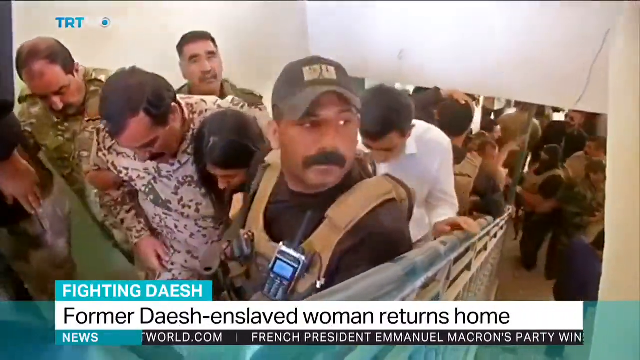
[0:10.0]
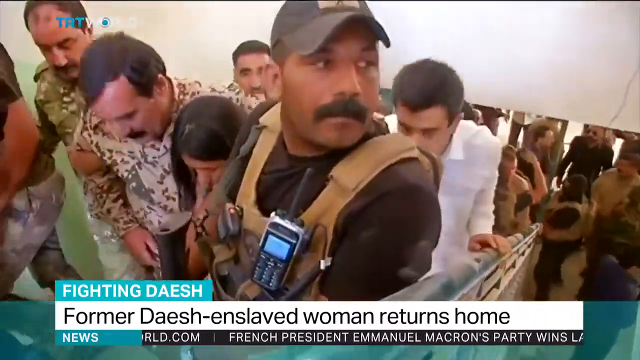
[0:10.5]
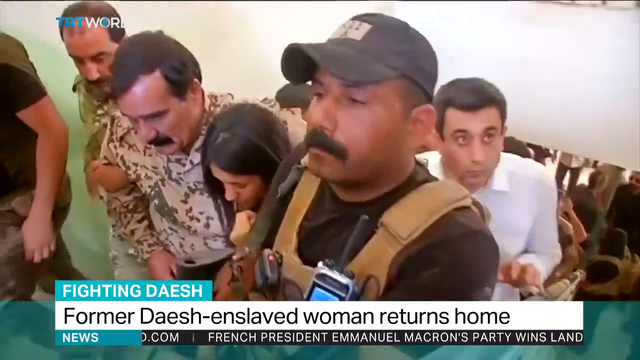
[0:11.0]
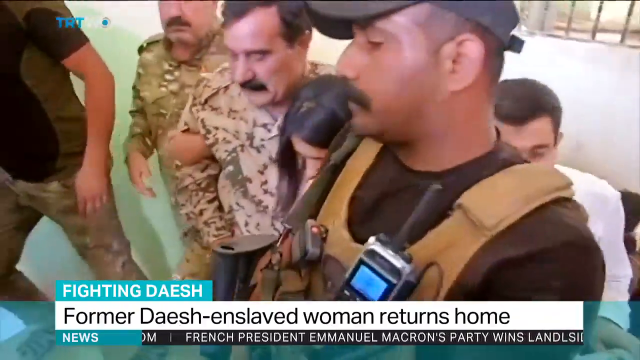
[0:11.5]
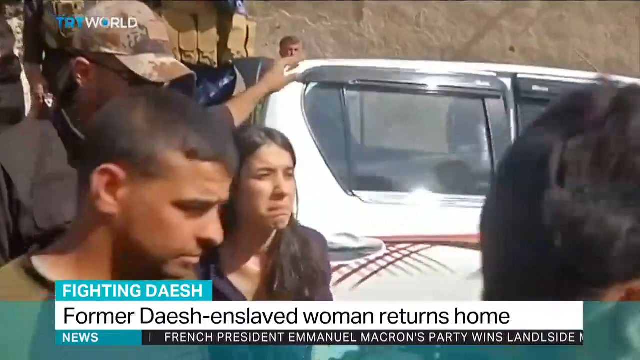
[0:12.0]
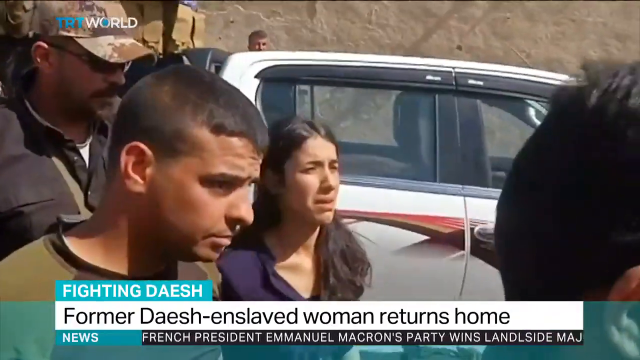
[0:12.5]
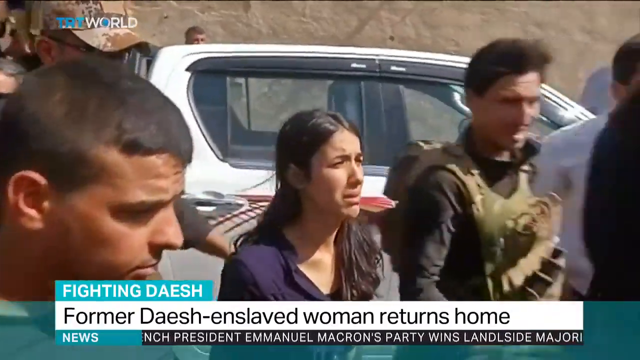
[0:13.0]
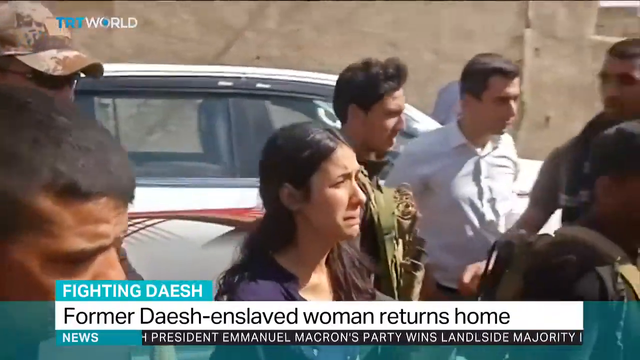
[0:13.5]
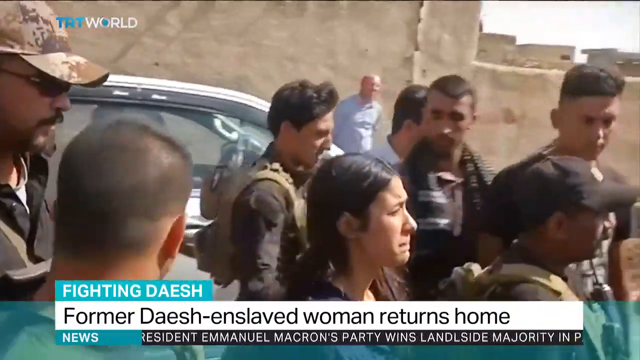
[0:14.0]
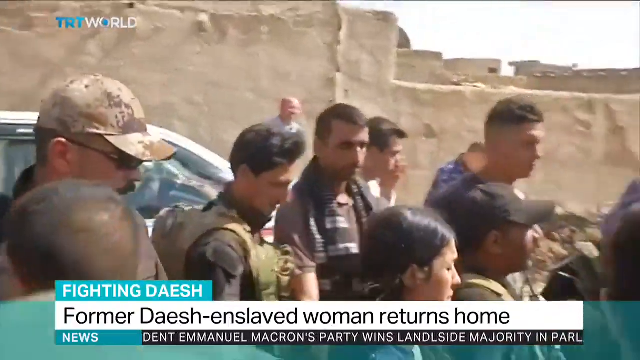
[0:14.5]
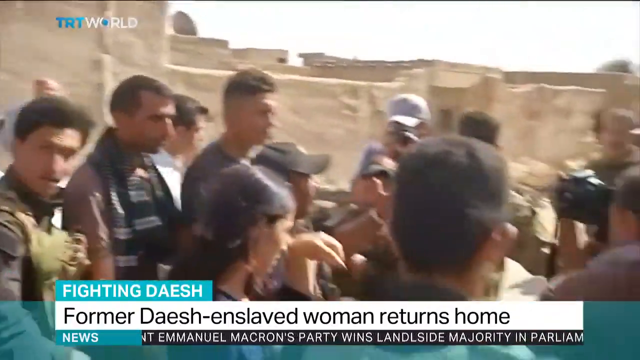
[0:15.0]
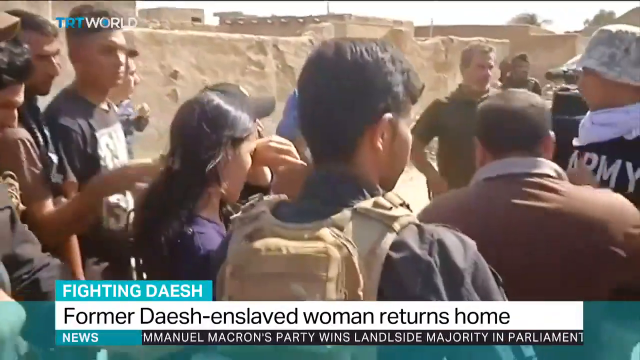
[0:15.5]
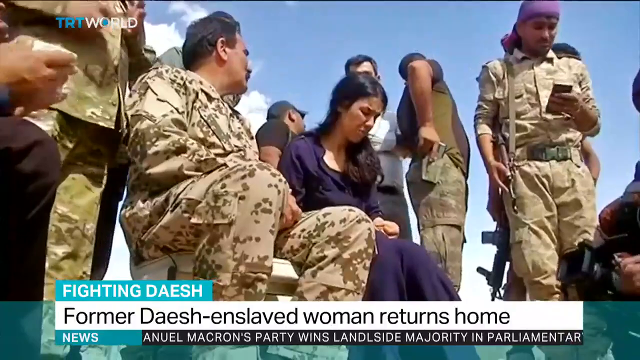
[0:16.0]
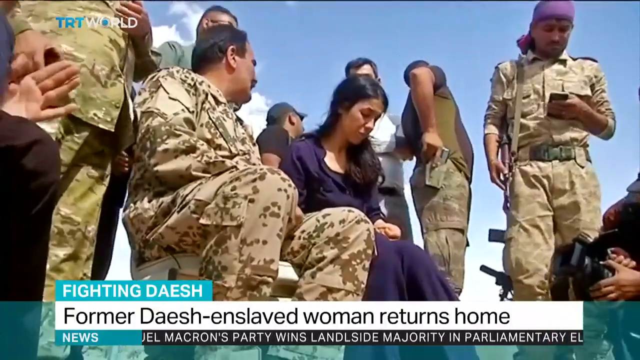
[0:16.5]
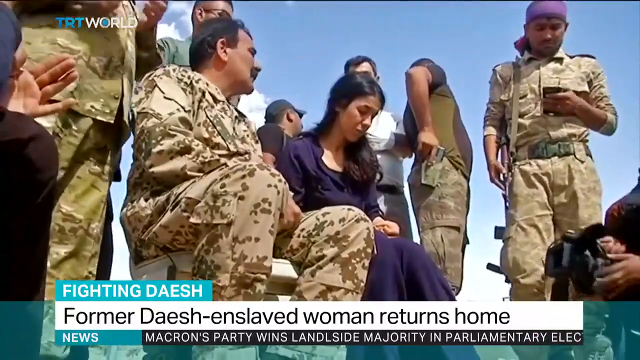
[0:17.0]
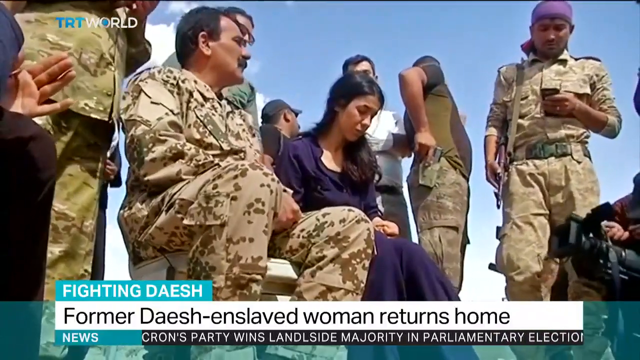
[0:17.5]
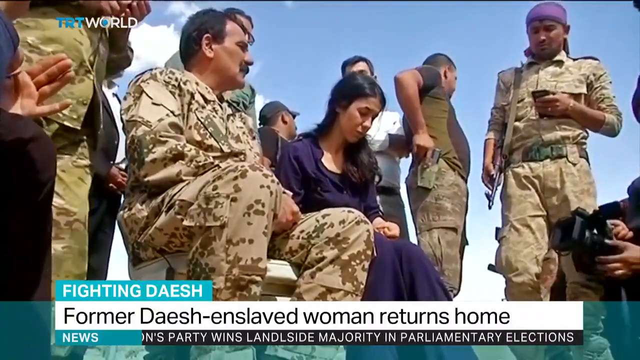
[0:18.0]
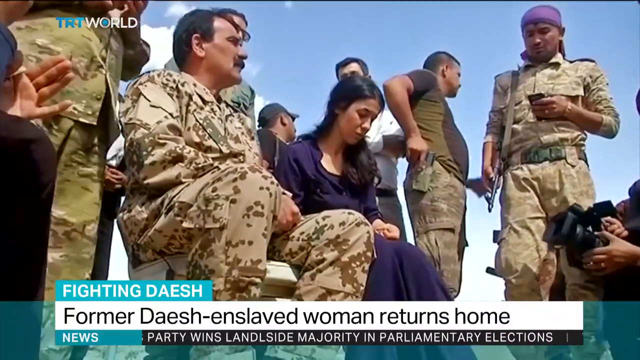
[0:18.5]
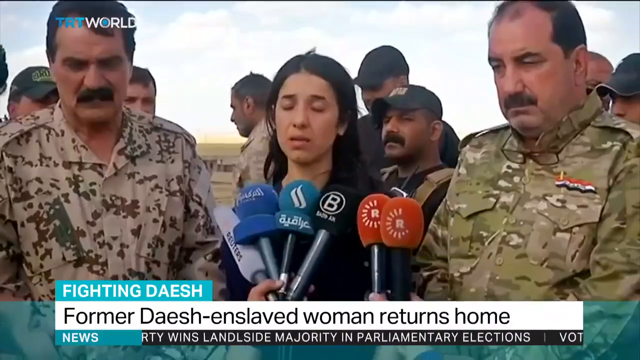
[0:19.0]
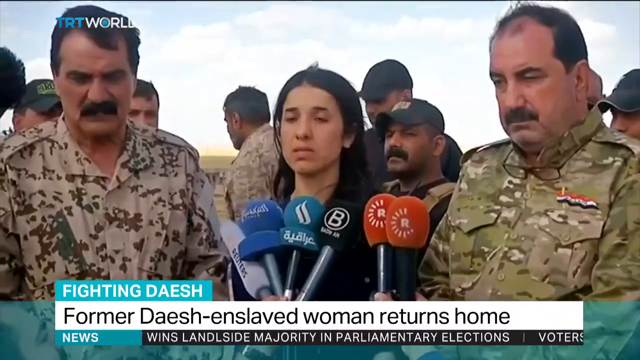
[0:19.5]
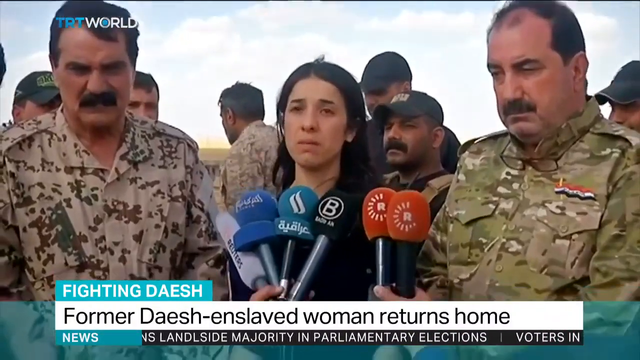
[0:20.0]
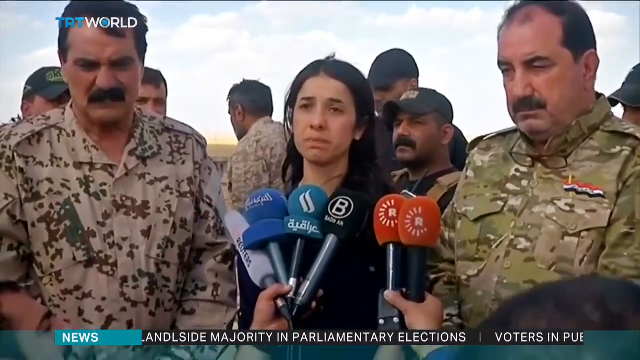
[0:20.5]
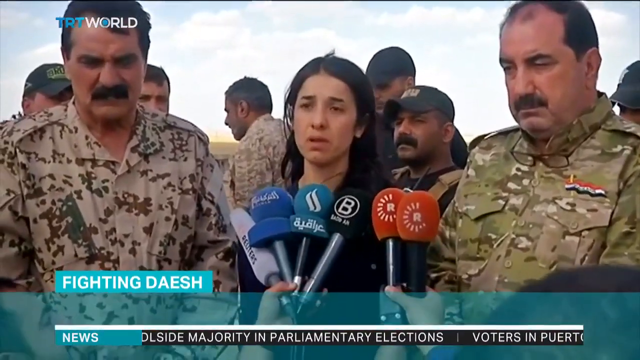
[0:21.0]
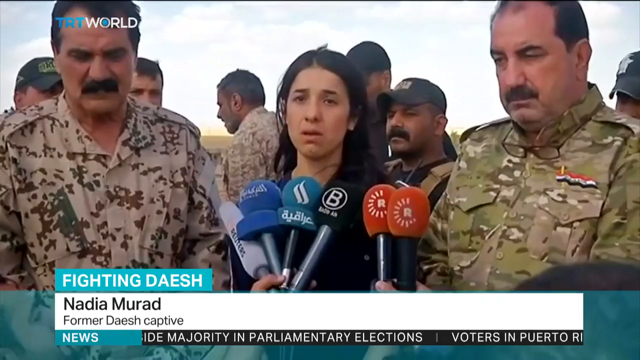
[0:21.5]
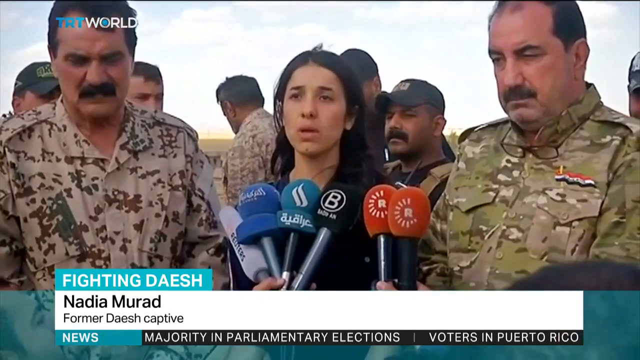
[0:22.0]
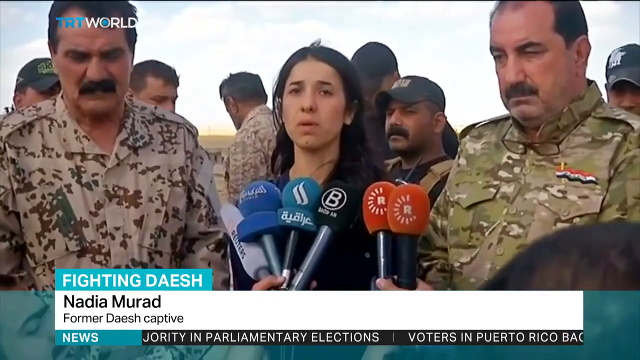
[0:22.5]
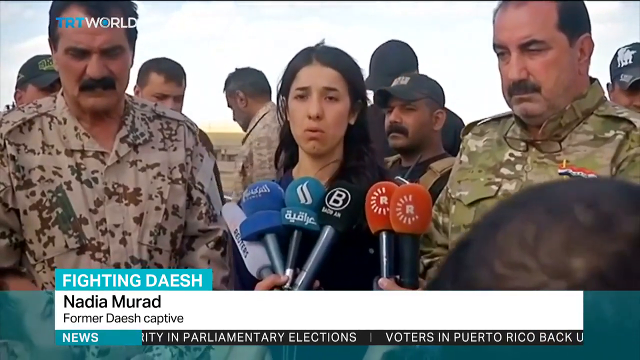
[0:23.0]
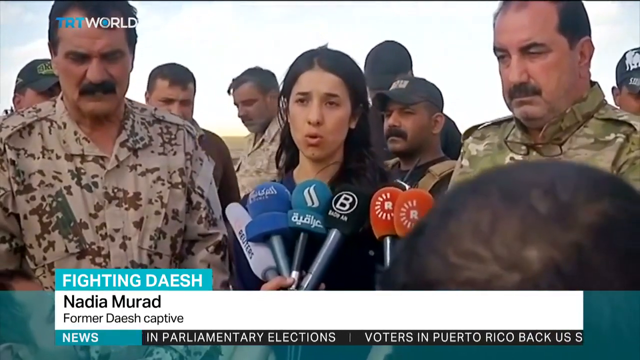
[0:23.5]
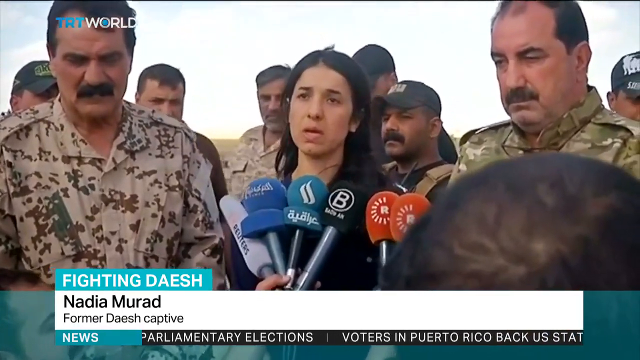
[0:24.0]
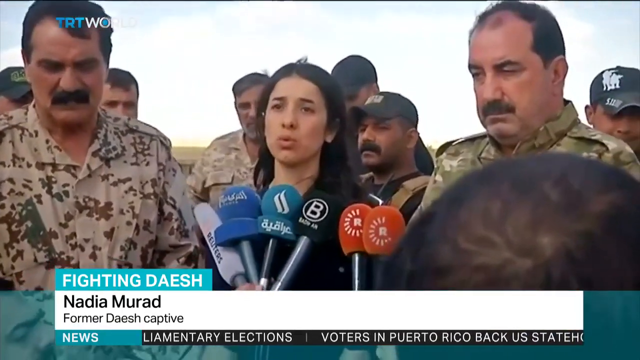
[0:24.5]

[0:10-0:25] The woman walks up some stairs with a man holding her. He wears what appears to be a beige multicolored outfit; it is unclear whether he is a family member or someone just trying to help her. She appears to be wearing a dark purple collared dress that appears to be v-neck or button-down. She is talking to what appears to be a news crew, with several microphones in front of her, and appears to be telling what she has gone through. Standing next to her is a man who appears to be in the armed forces, wearing combat attire. He has dark hair, appears to be balding in the front, has a large bushy mustache, and appears to be a tall, heavyset man. In the next shot the man stands next to her, and a younger man standing next to her wears some sort of purple handkerchief or something on his head. They appear to be out in a desert or some dry, hot area. Text at the bottom of the image reads "former enslaved woman returned".